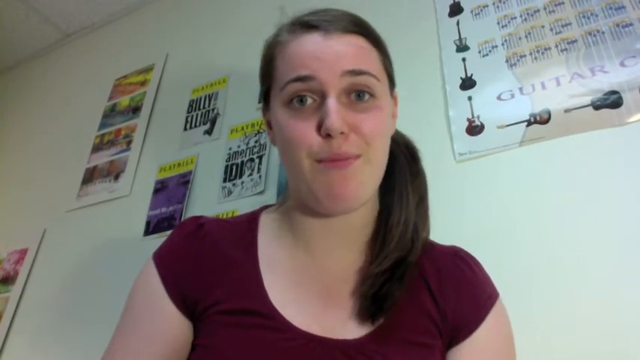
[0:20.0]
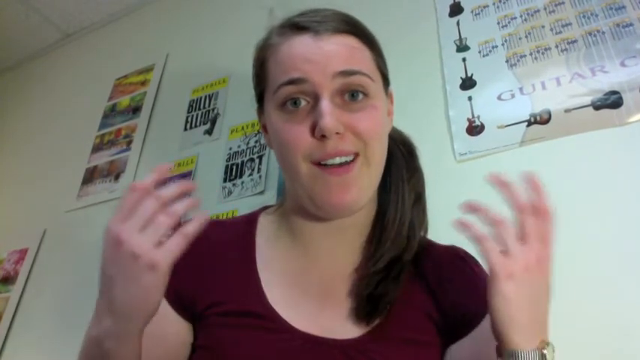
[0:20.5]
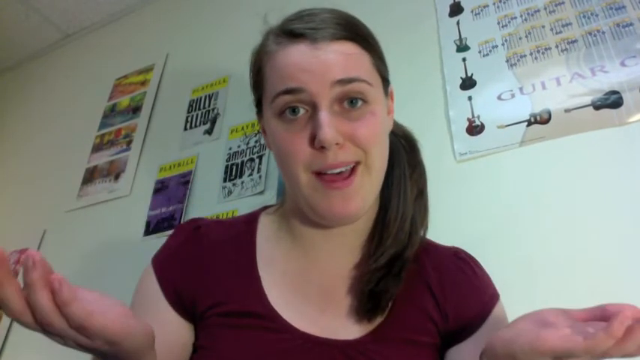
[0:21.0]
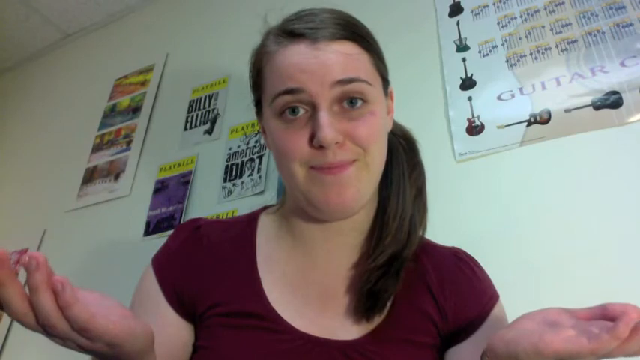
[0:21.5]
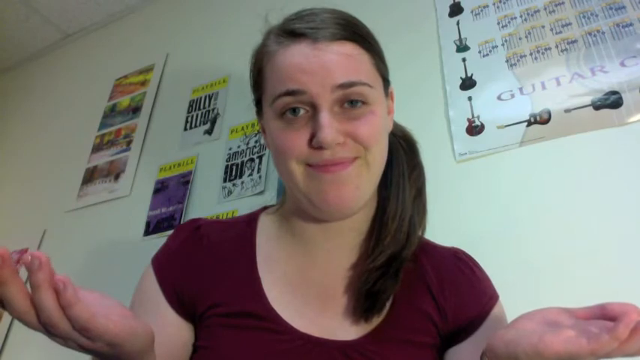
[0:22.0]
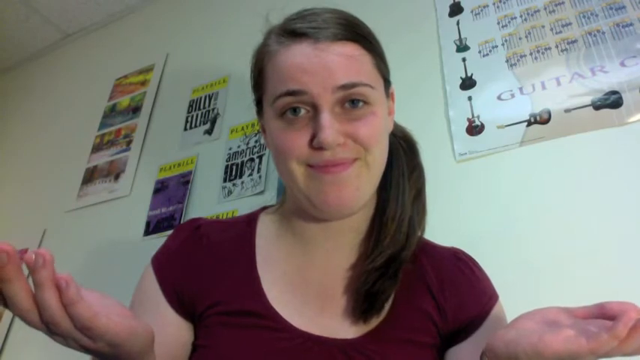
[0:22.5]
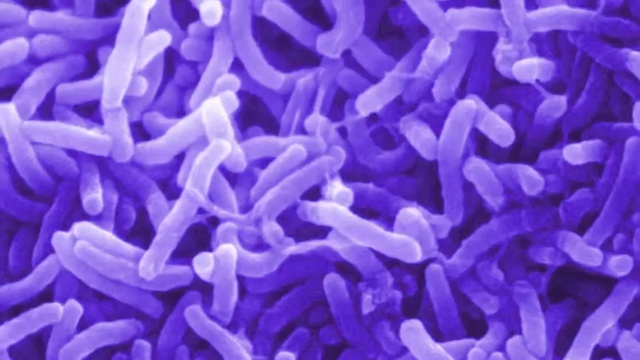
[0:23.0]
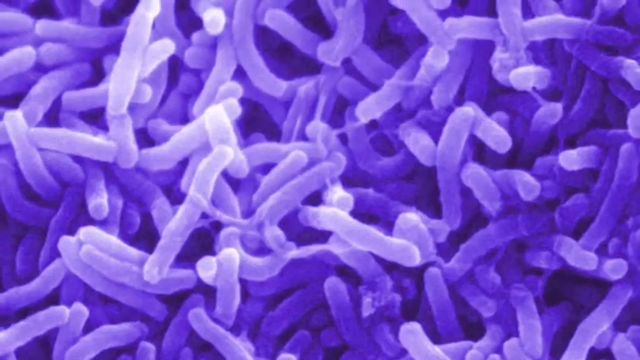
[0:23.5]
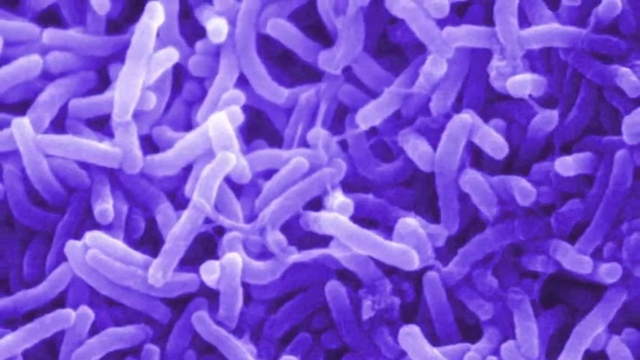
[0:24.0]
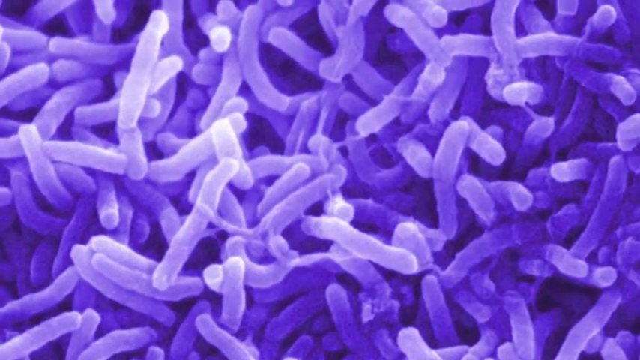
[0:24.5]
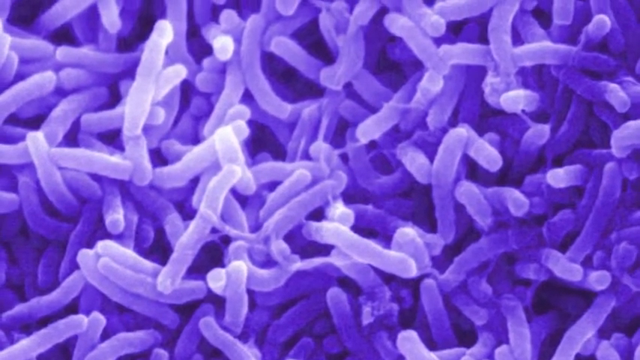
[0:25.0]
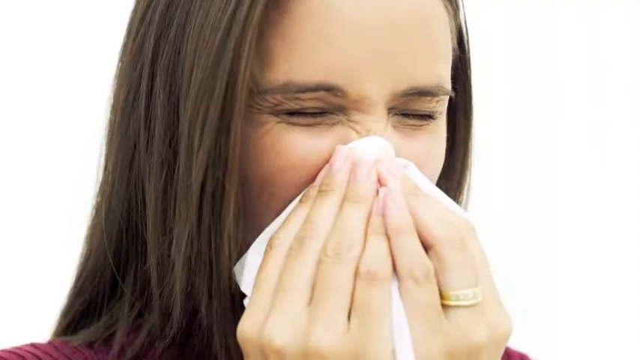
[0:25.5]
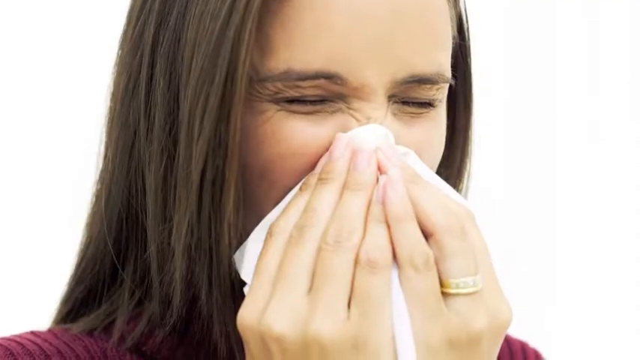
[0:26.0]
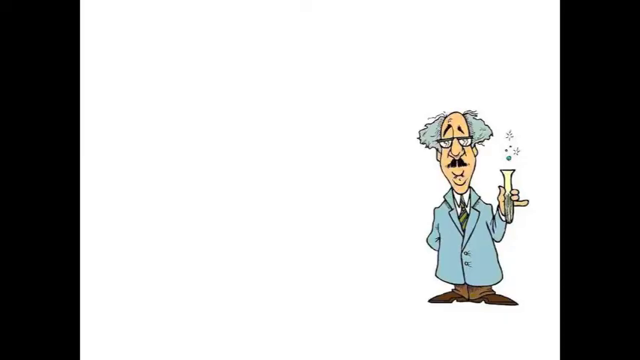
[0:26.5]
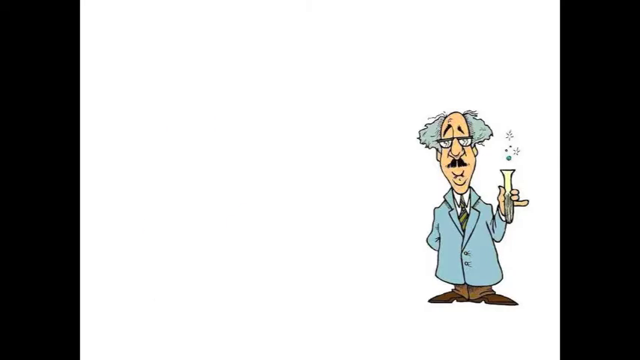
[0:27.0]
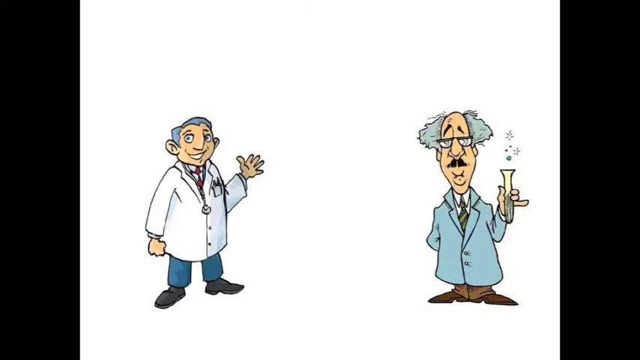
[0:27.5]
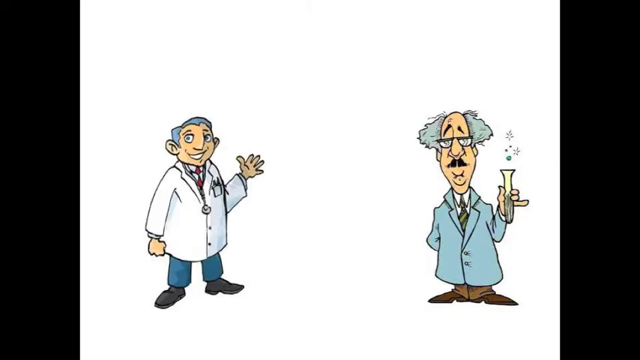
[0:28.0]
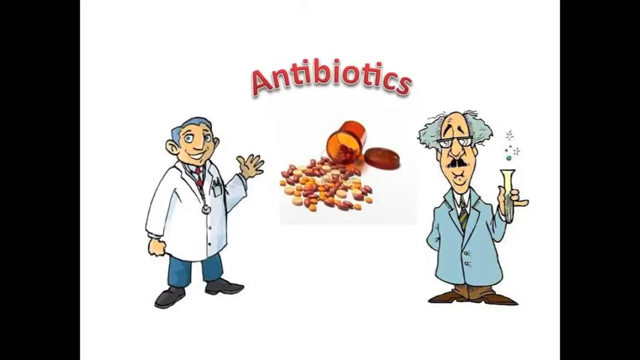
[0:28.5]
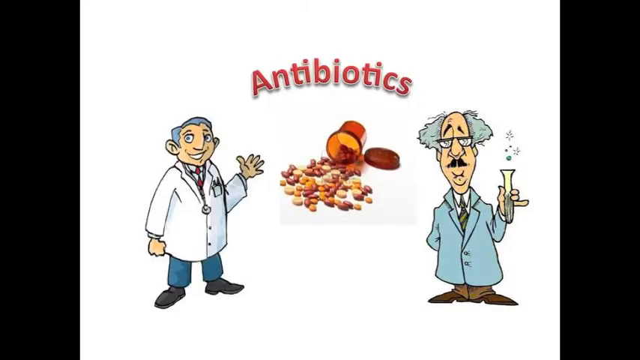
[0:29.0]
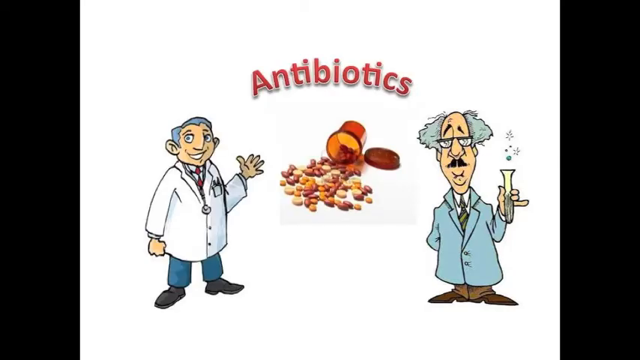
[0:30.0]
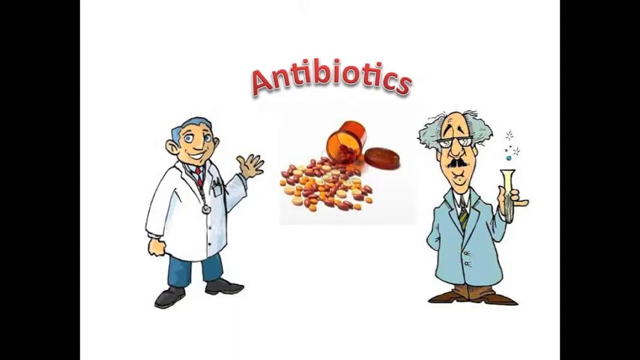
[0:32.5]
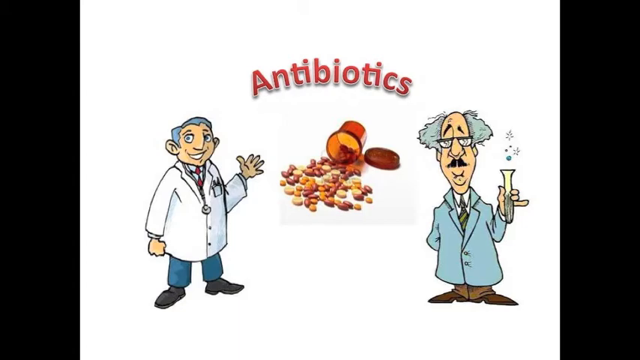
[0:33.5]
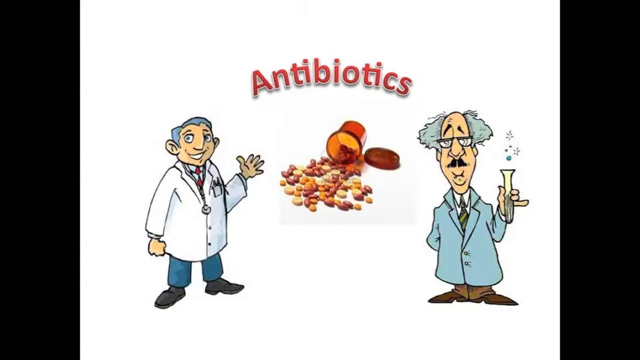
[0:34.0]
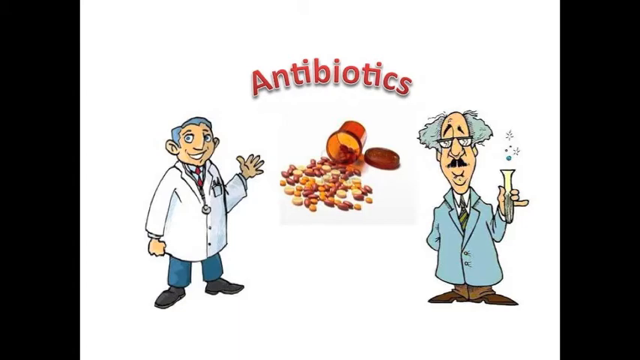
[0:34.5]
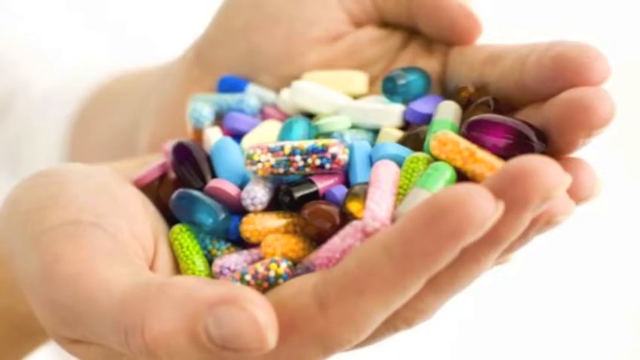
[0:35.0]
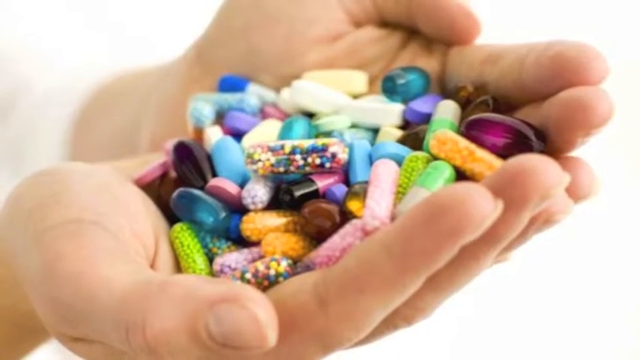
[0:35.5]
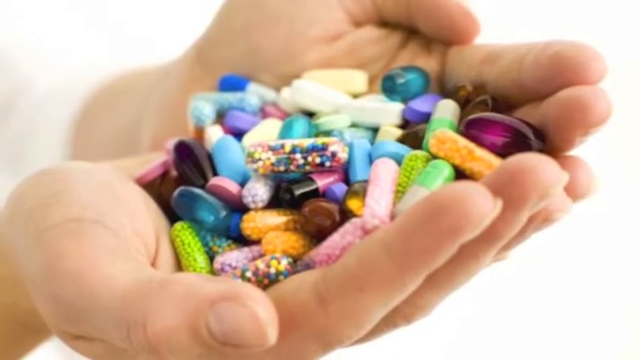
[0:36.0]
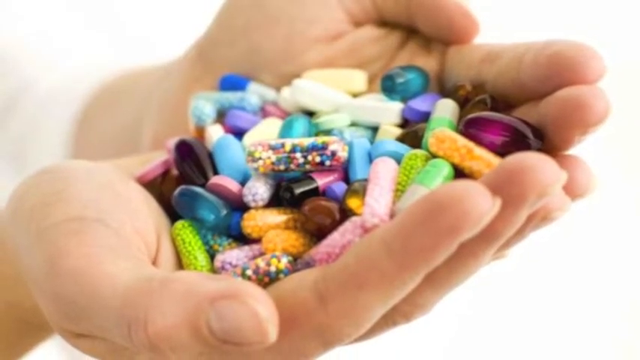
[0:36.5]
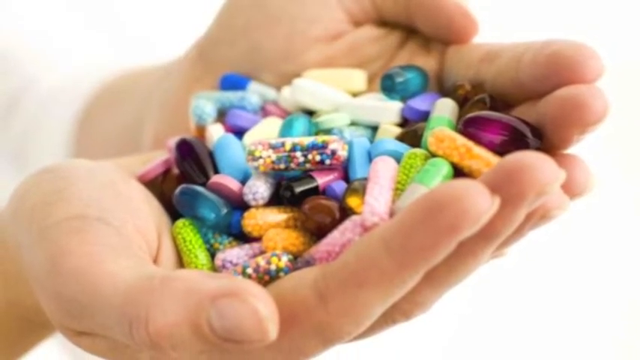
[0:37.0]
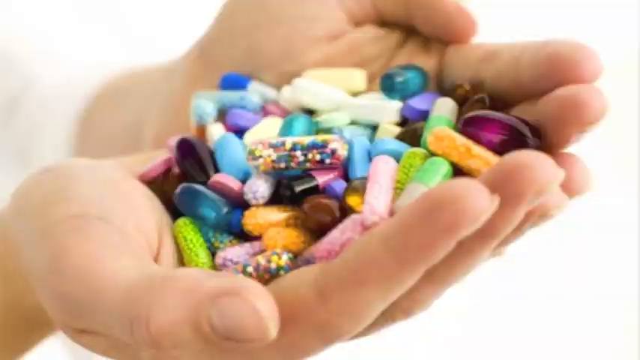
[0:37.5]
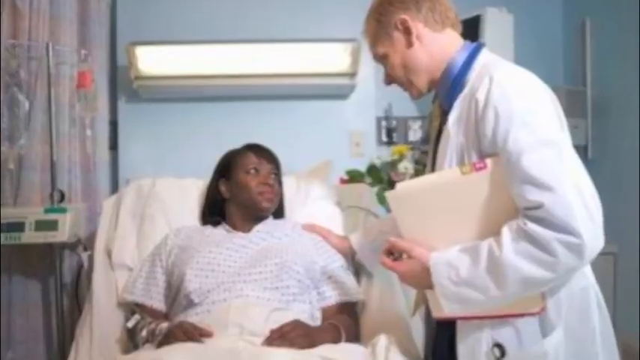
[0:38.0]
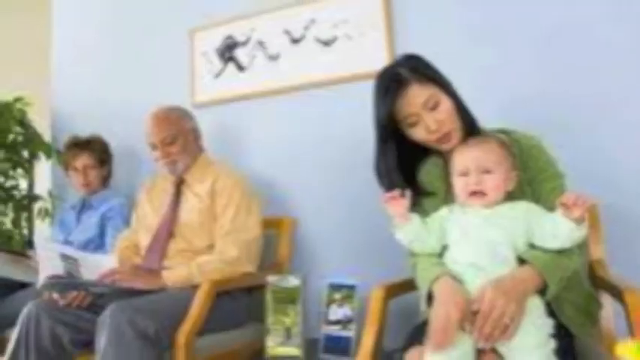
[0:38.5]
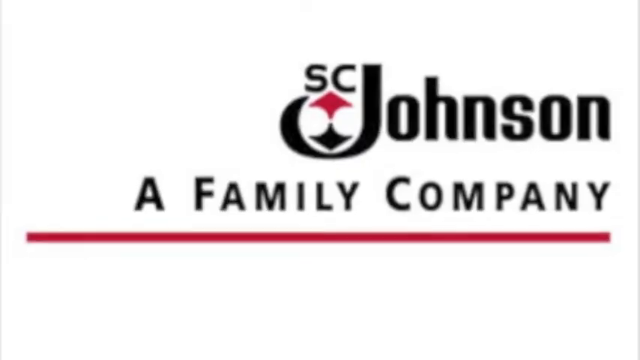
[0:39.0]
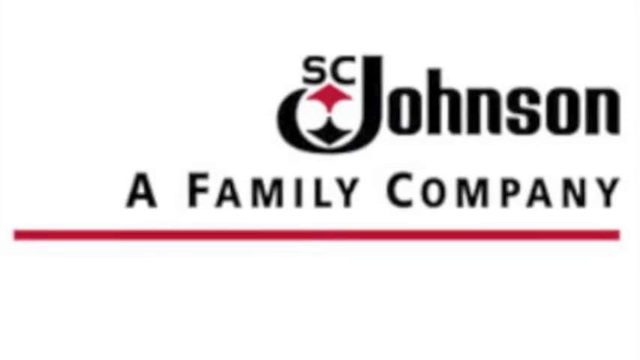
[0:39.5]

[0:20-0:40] The same girl appears with the posters still on the wall. Images follow one another very quickly: purple virus-type things that look like worms; a woman in a red shirt blowing her nose; what look like scientists and doctors showing a bottle of pills labeled "antibiotics"; a bunch of different pills in a white hand; and a spilled-over pill bottle between two cartoon scientists, with pills that look like they have candy in them. There are what look like several families, including a mom with a baby, with other people in what looks like a waiting room. A Black woman is in what looks like a hospital gown, and a doctor puts his hand on her. A scientist holds what looks like a vial and wears brown boots. There are a bunch of different colored pills. The girl keeps doing the same hand movements.